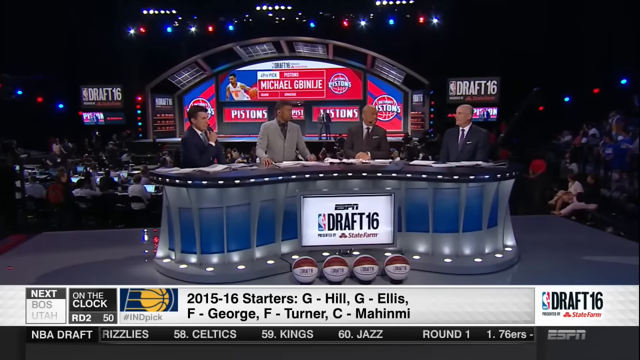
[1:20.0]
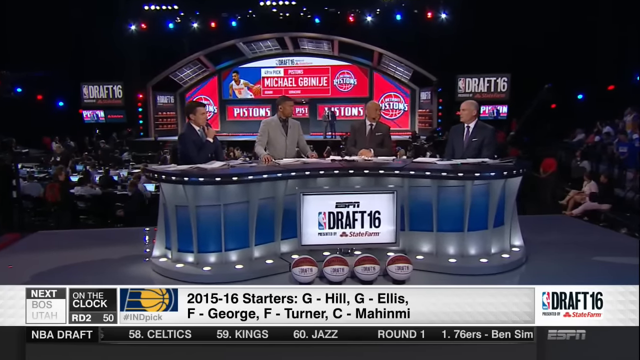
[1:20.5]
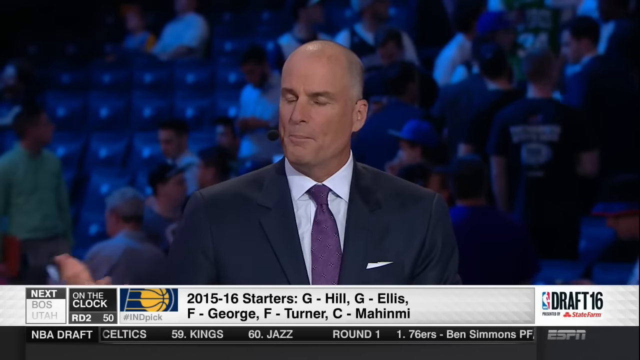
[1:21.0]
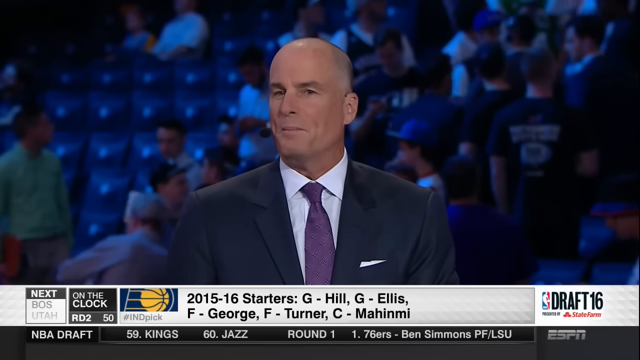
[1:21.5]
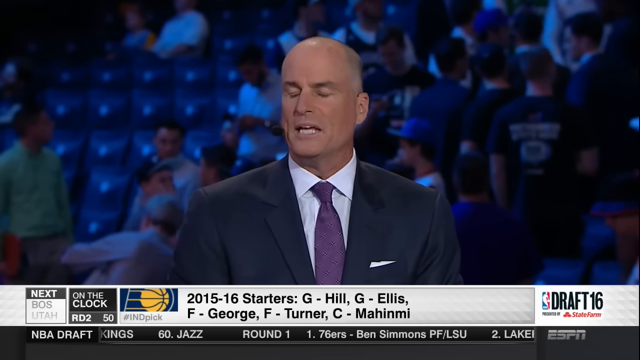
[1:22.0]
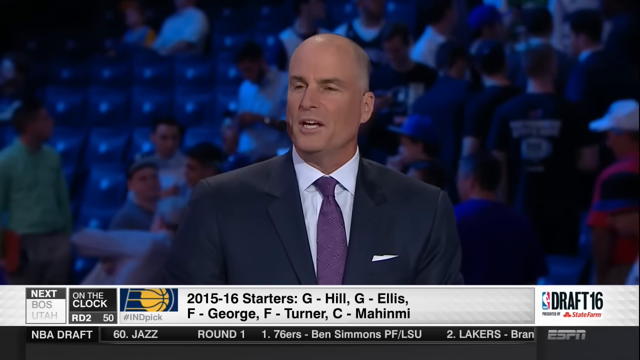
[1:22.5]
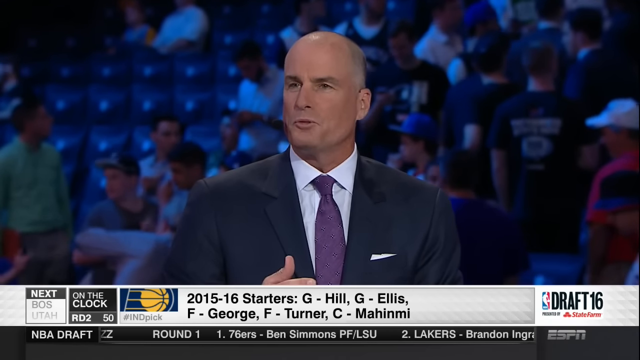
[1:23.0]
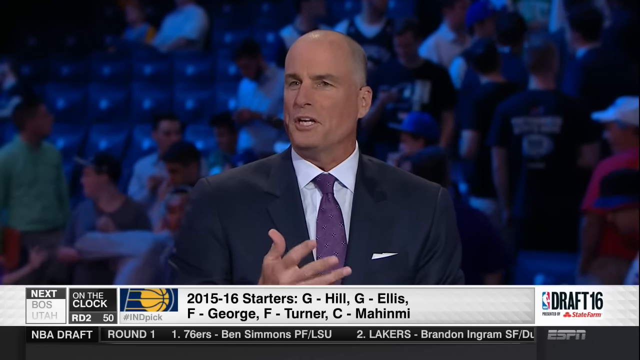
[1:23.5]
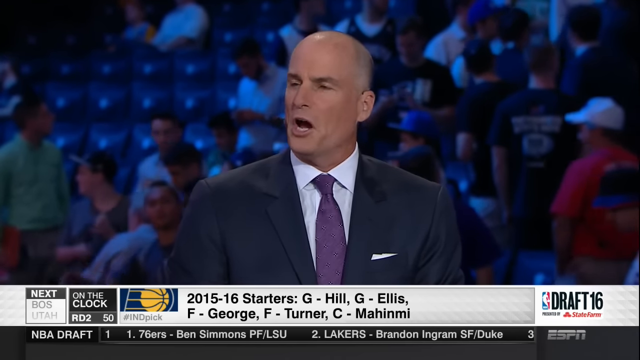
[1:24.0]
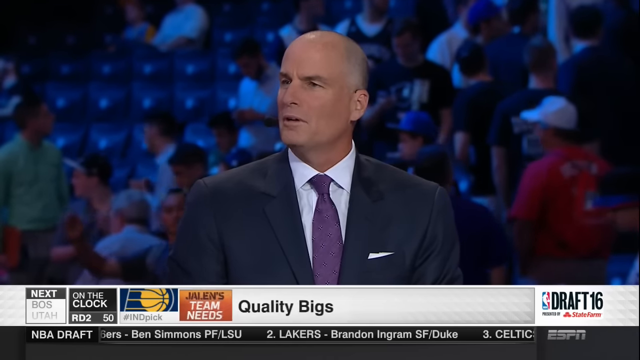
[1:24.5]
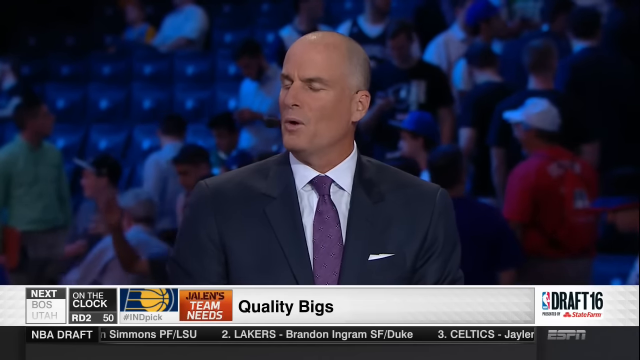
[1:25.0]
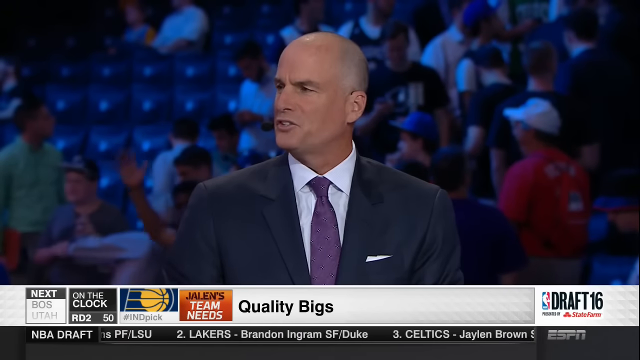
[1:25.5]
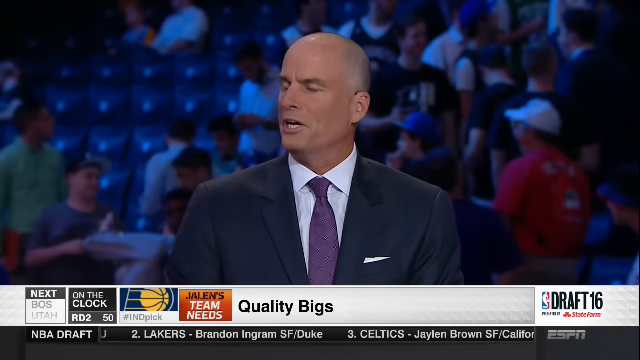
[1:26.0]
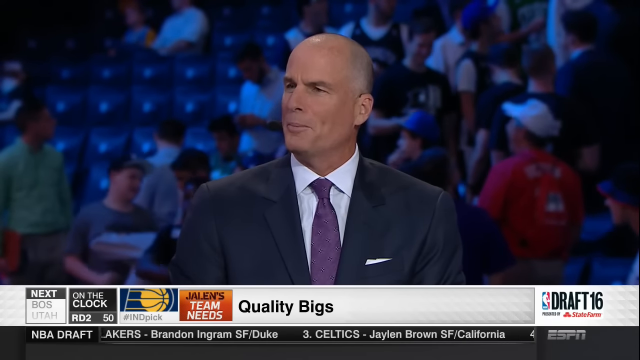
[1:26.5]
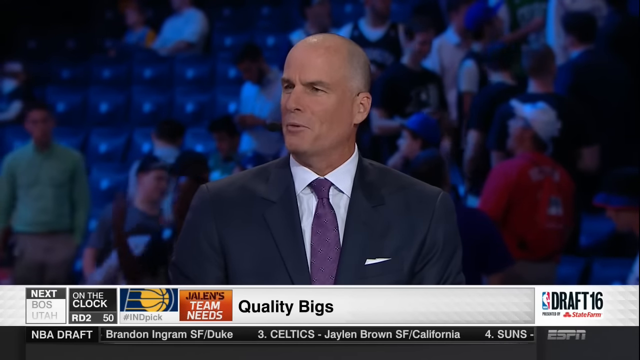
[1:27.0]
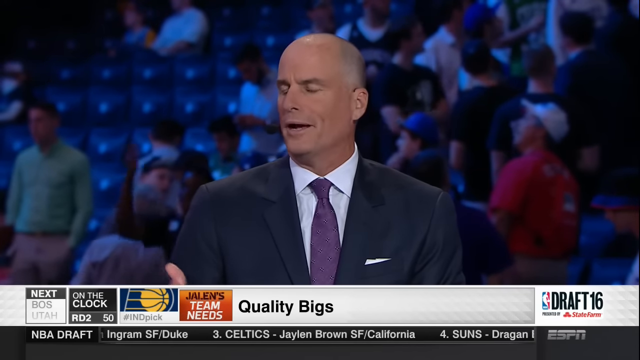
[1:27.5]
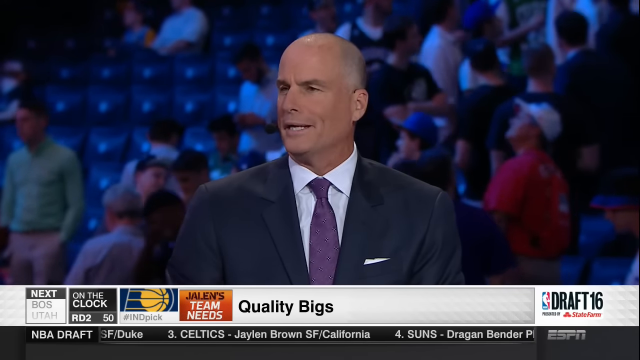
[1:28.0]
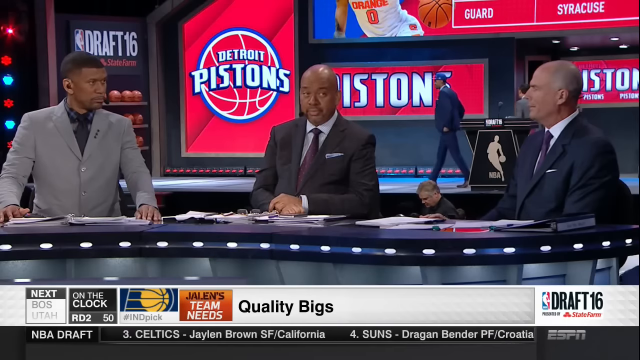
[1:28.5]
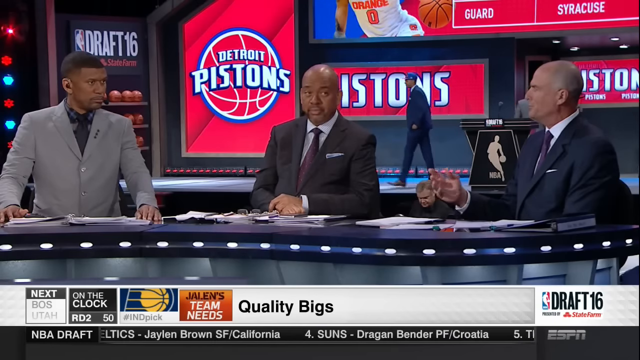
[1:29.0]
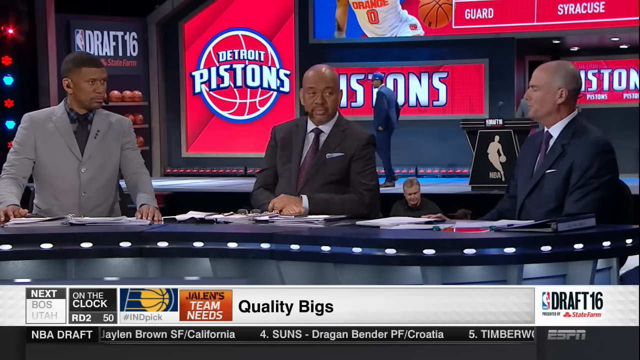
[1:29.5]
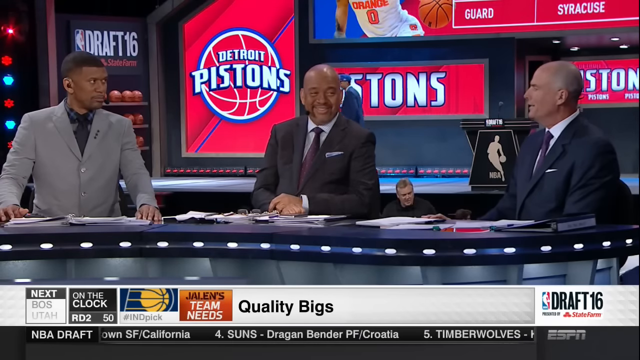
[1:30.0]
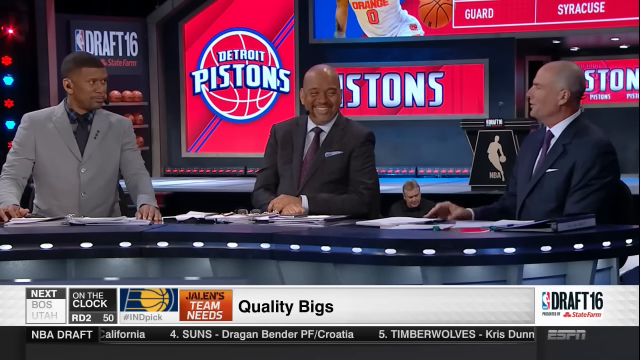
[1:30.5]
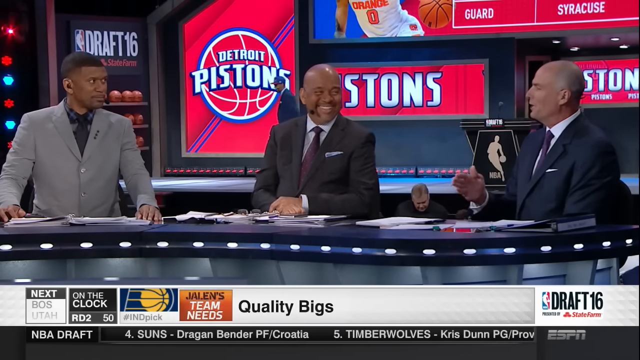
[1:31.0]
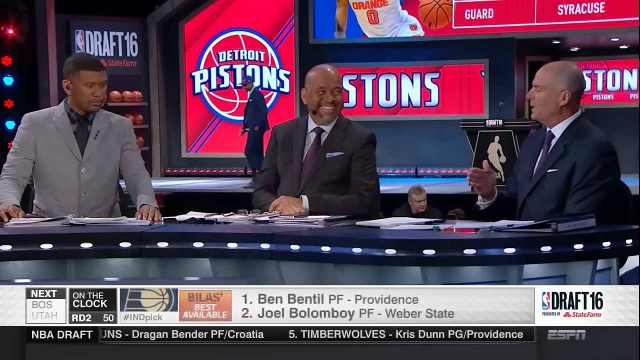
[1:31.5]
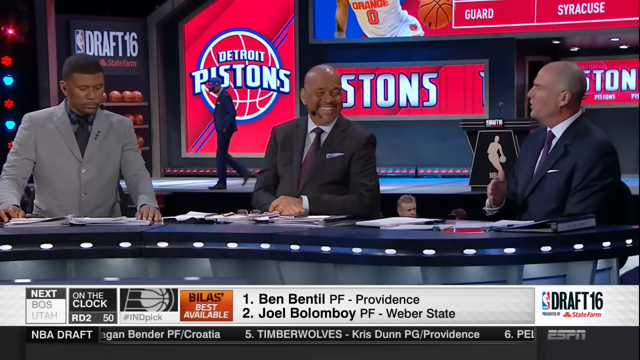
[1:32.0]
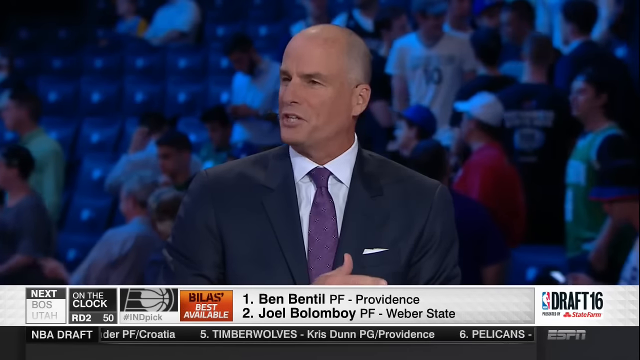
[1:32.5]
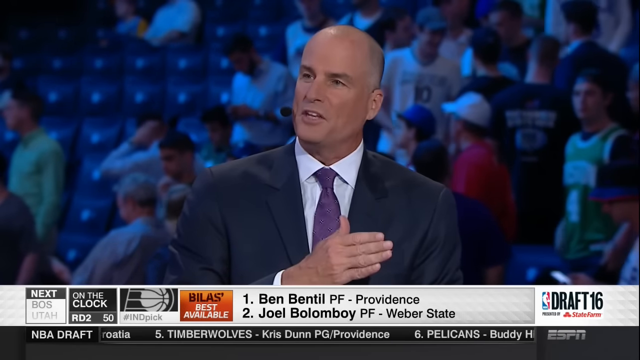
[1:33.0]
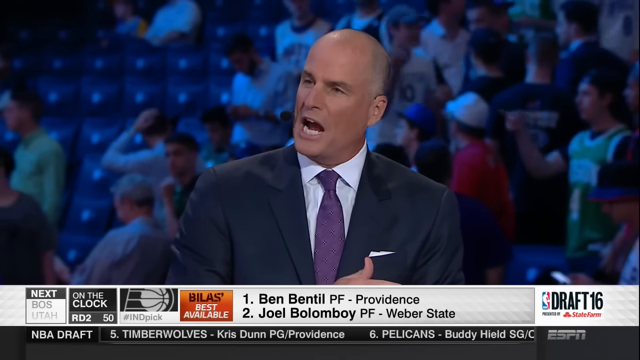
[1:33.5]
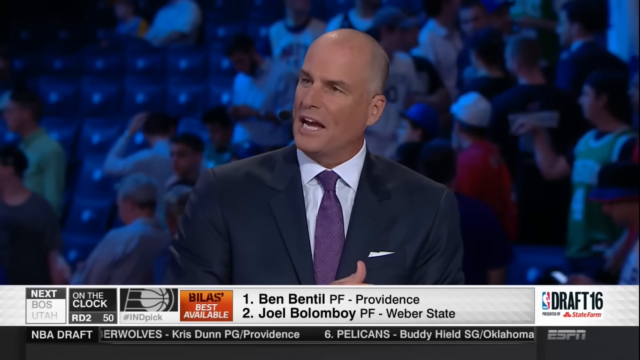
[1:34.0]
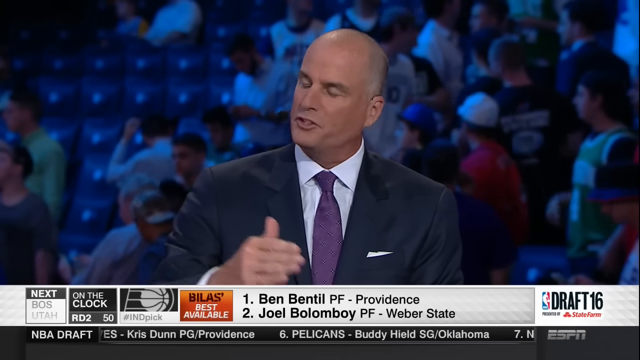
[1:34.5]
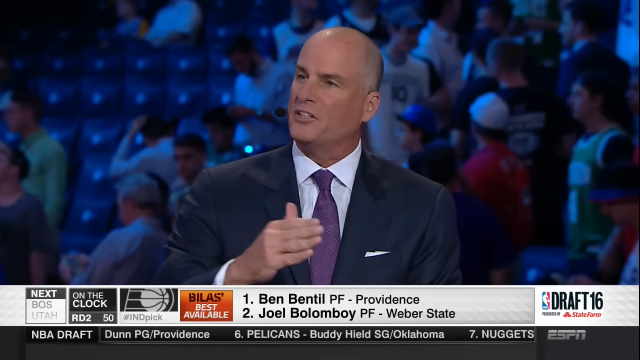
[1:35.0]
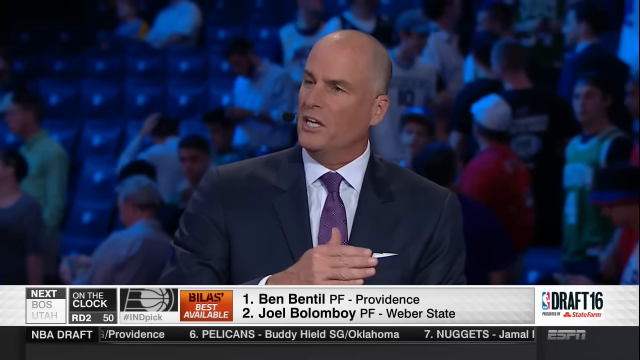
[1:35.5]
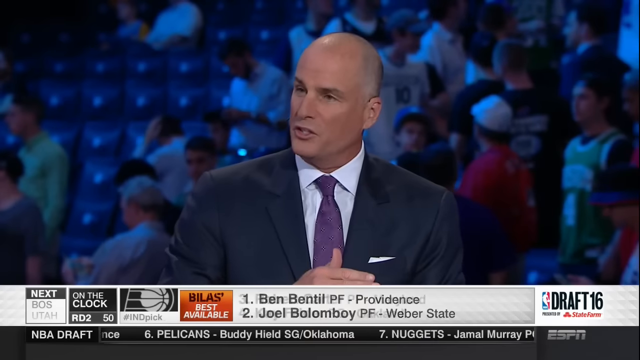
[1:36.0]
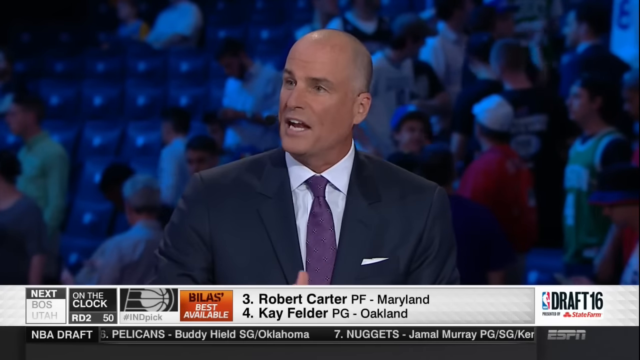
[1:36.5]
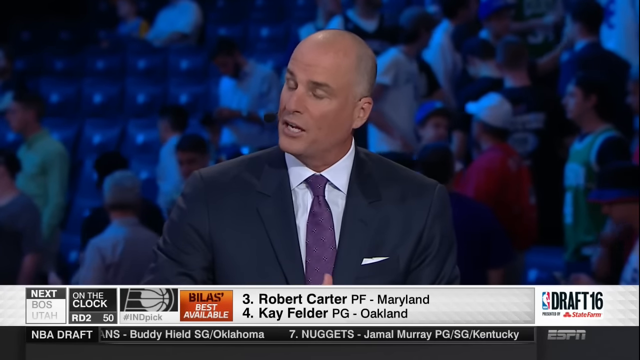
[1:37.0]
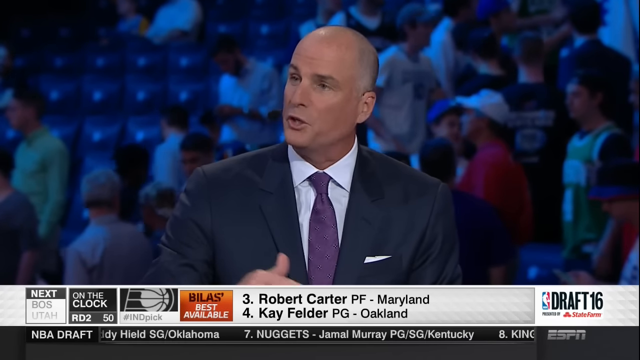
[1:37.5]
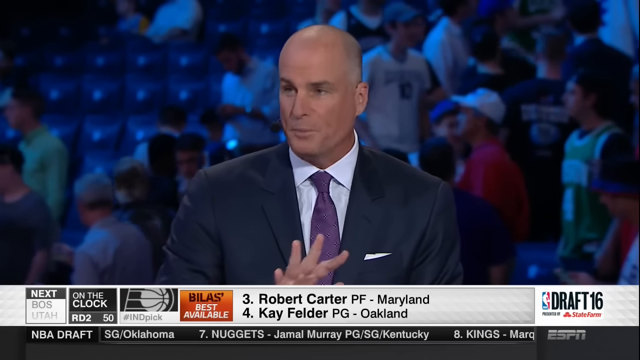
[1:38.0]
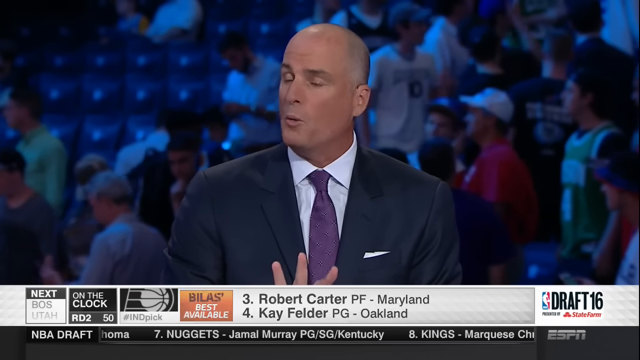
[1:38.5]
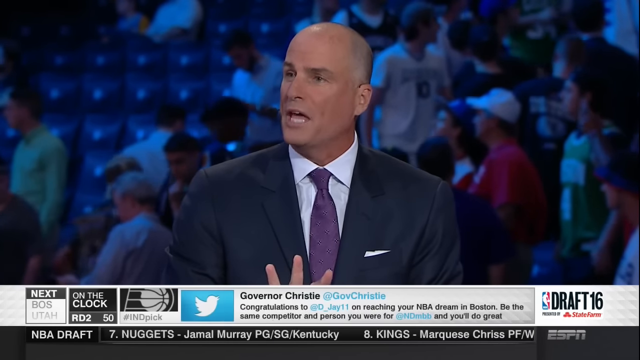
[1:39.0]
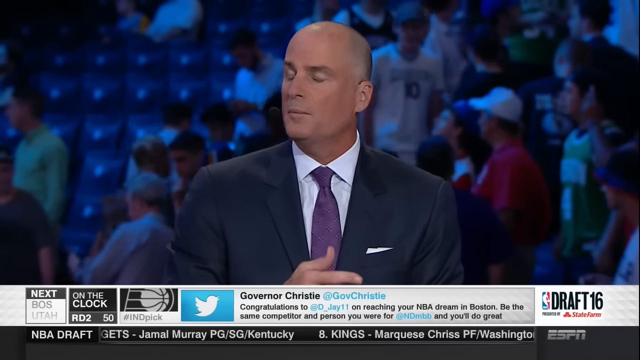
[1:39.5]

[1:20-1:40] Four people sit at a podium; they may have been players before. In front of it, a monitor reads "ESPN Draft 16", apparently with "State Farm" underneath, and four basketballs are there. At the bottom, black text reads "2015-2016 starters: G-Hill, G-Ellis, F-George, F-Turner, C-" followed by a name spelled M-A-H-I-N-M-I. A bald man on the right side of the podium, wearing a dark navy blue suit, is talking. Text at the bottom mentions "best available", and then a Twitter comment from Governor Christie about the NBA draft appears.